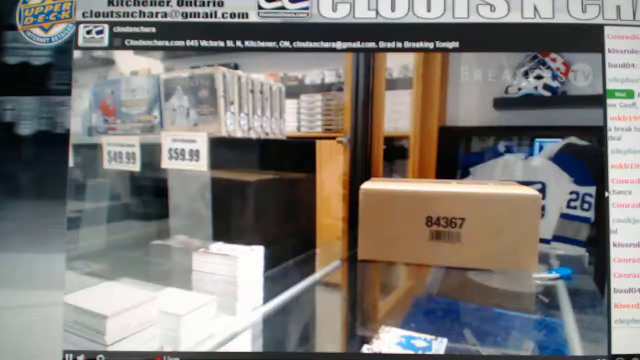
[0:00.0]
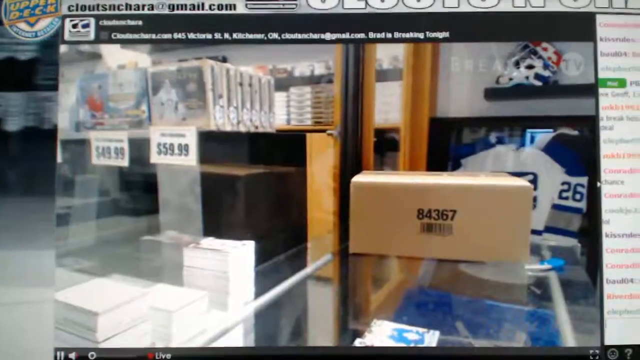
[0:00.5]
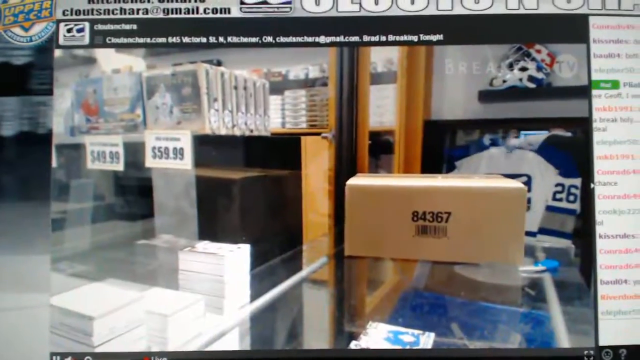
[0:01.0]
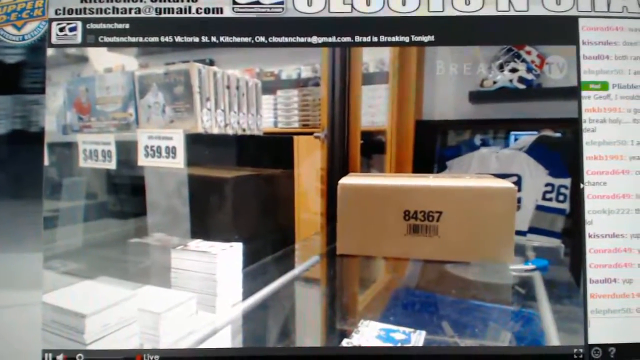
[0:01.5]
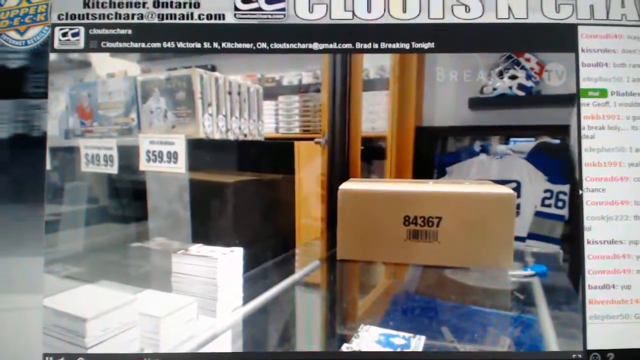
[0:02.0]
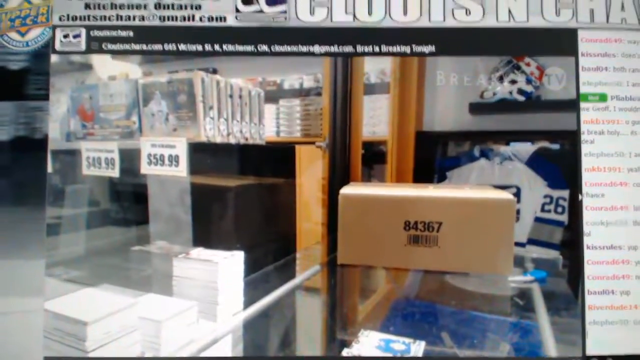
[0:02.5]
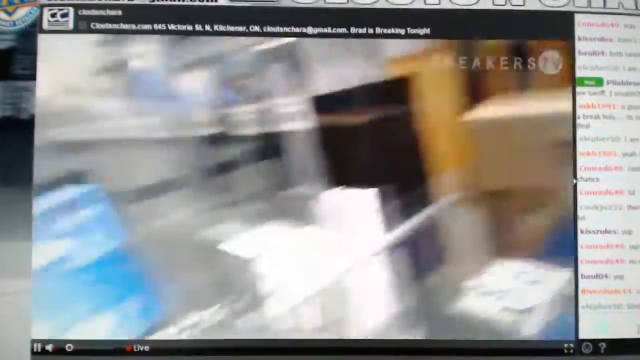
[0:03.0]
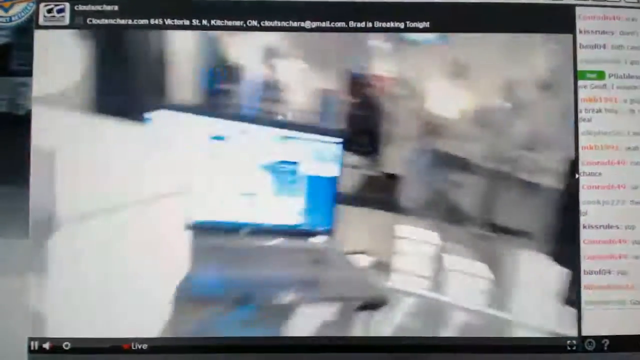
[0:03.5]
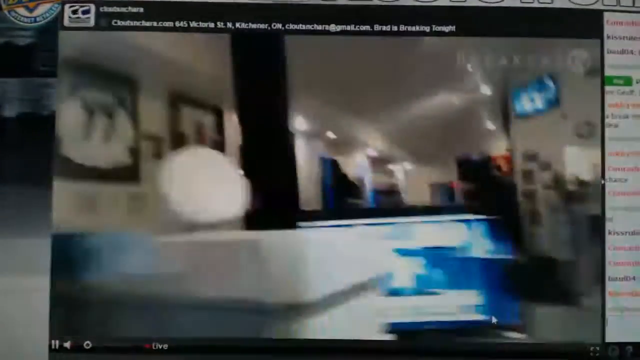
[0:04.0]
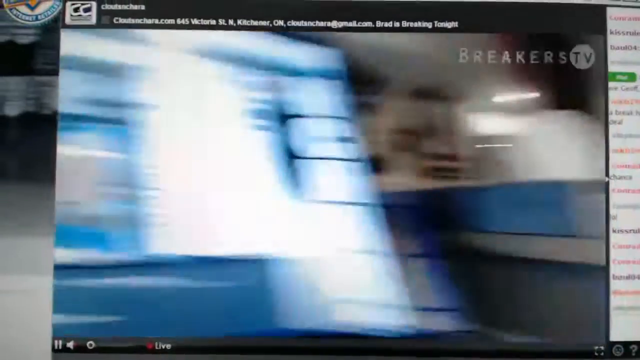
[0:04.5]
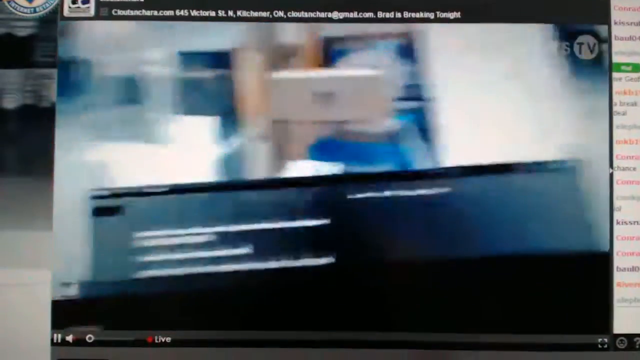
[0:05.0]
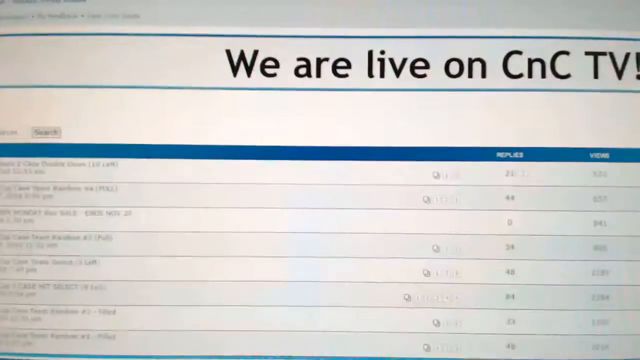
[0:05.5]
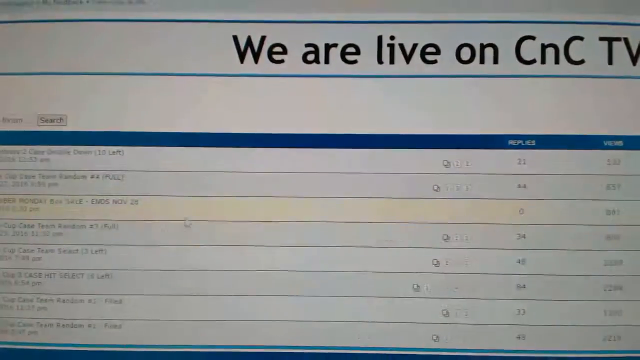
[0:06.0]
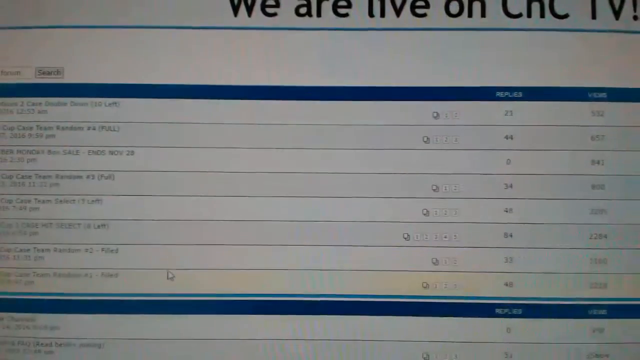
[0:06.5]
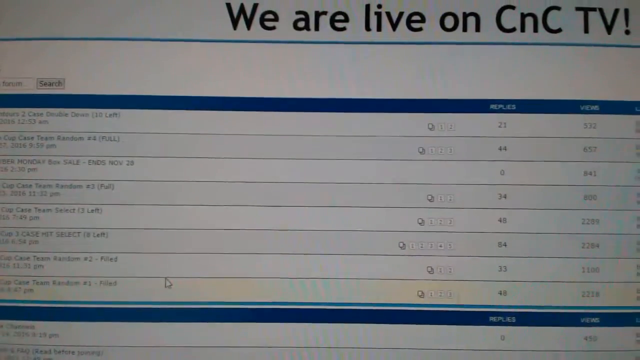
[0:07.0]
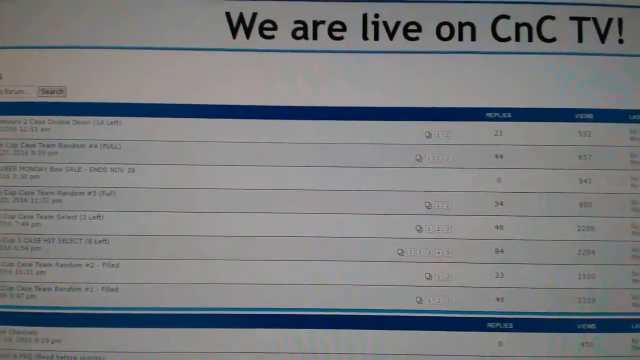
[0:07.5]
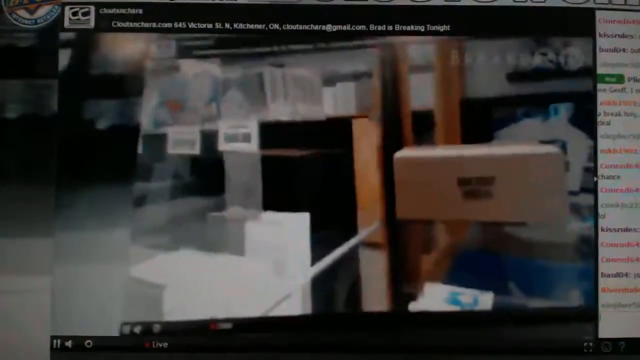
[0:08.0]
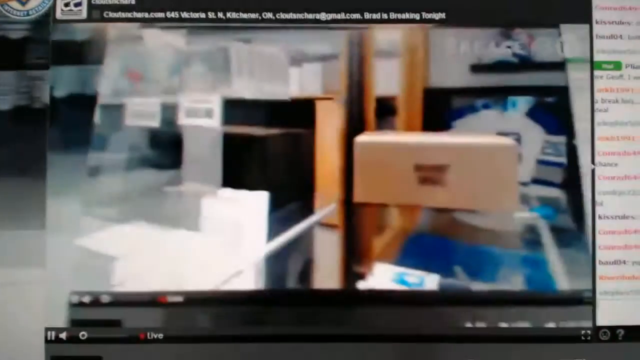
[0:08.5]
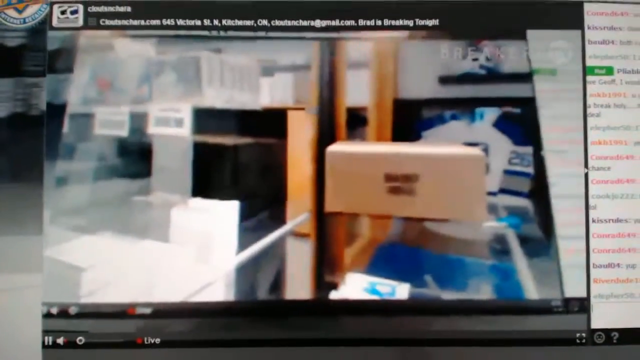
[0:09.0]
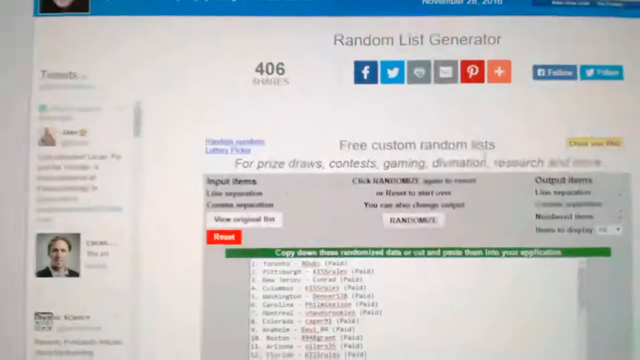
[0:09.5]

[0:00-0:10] The footage is very amateur. It looks kind of like a store, but there are also some really disorganized areas and boxes sitting around. Two items are for sale, one for $48.99 and one for $59.99. The video keeps flipping back and forth between what is apparently the Facebook page and the store. In the store, the disorganized storage area is completely connected to and visible from the shop floor where things are for sale. Nobody is in there; only the shop floor with things for sale and the storage area are visible. On one side there is a computer screen of sorts with the usual Facebook and Twitter items at the top, looking kind of like a website.